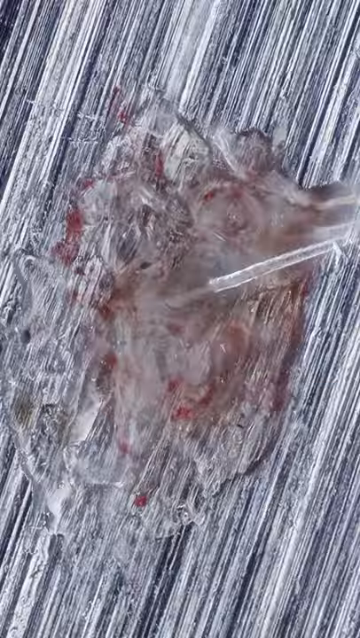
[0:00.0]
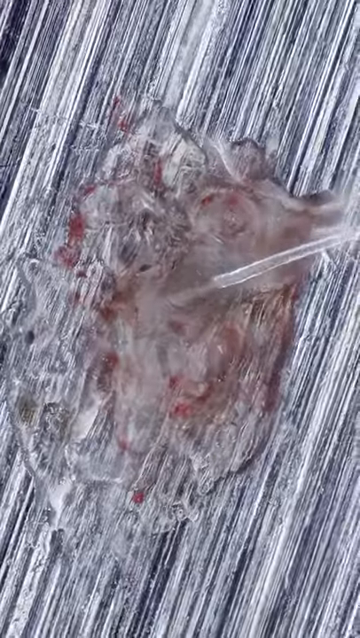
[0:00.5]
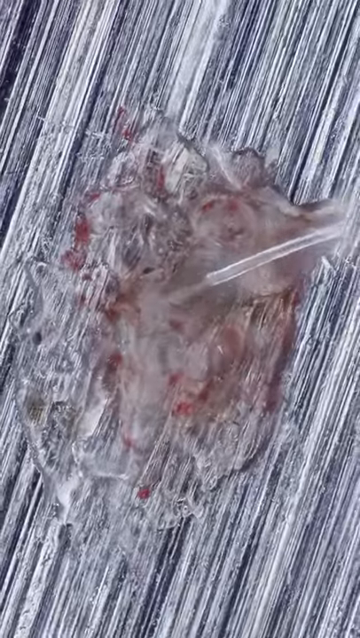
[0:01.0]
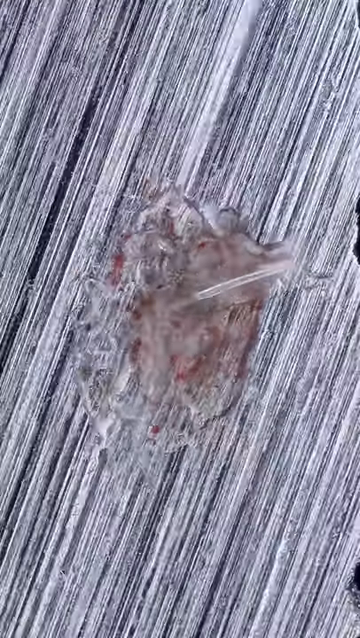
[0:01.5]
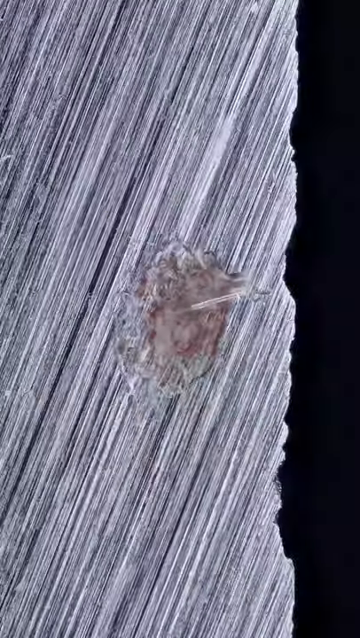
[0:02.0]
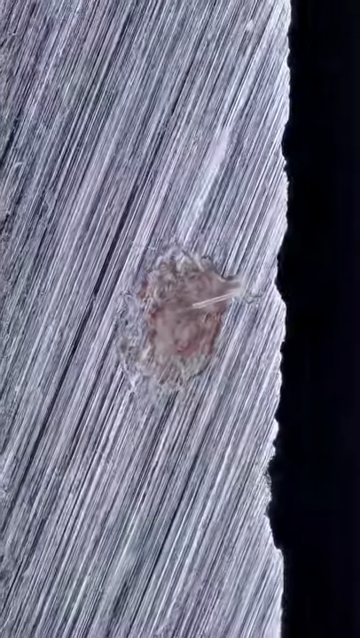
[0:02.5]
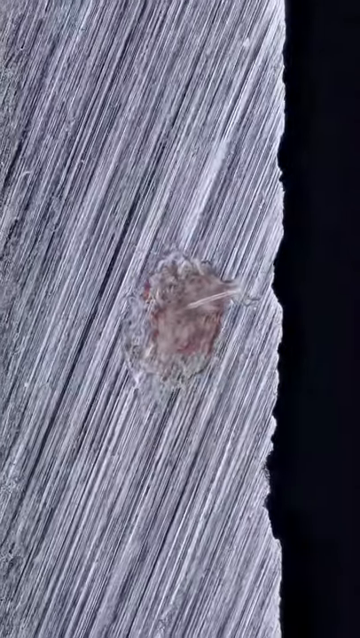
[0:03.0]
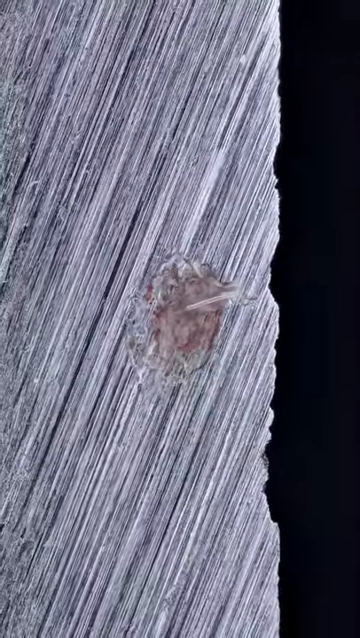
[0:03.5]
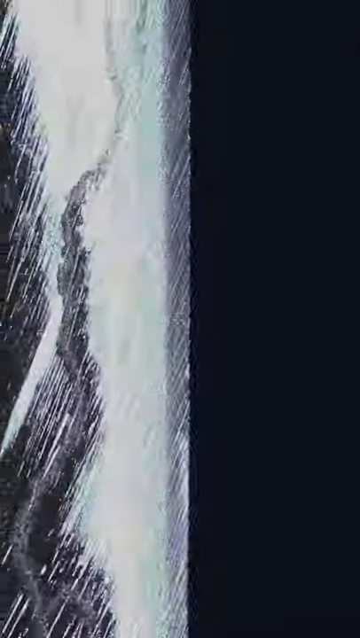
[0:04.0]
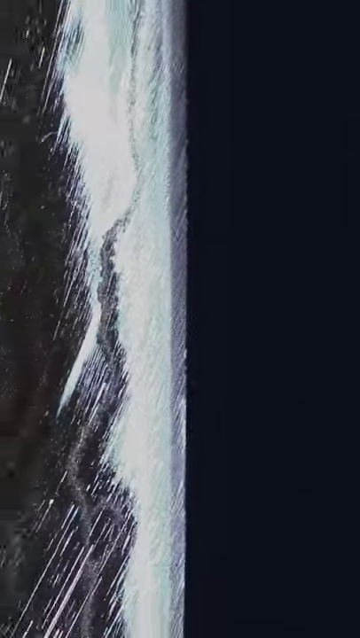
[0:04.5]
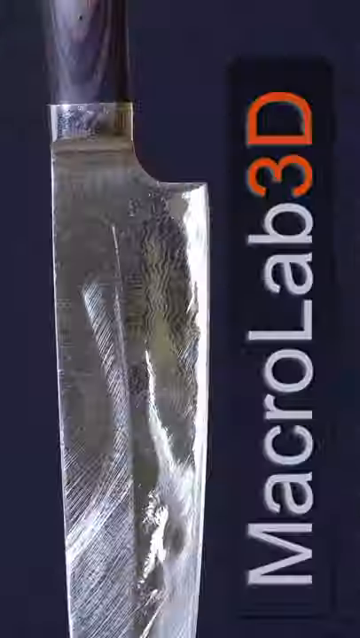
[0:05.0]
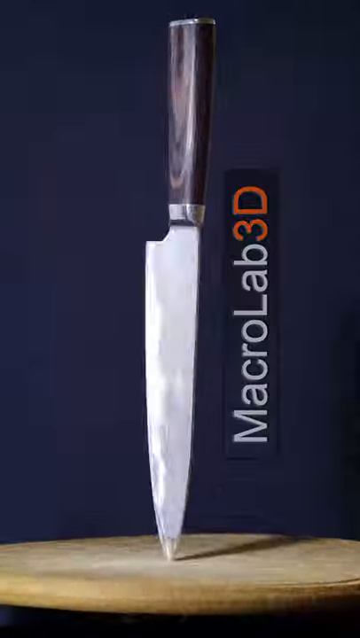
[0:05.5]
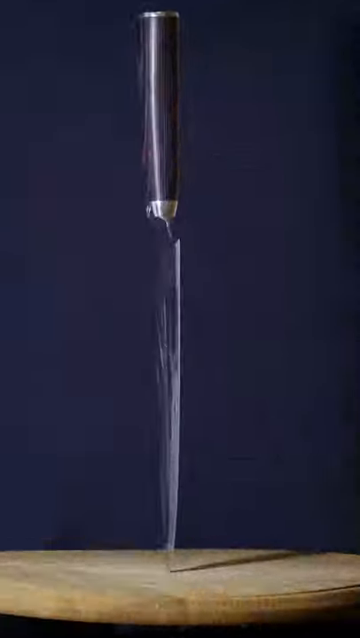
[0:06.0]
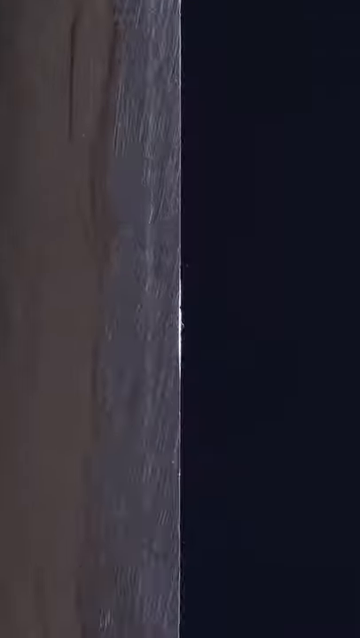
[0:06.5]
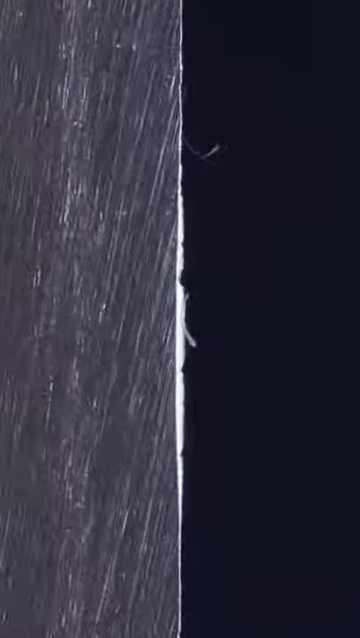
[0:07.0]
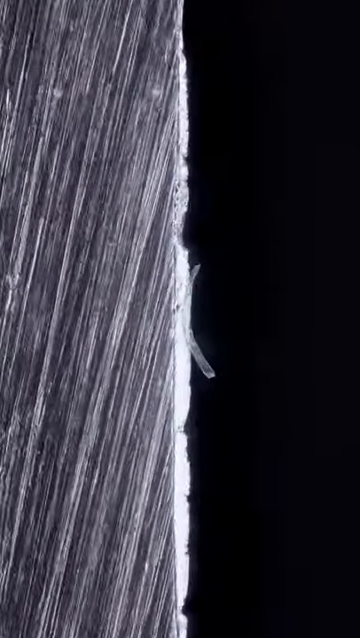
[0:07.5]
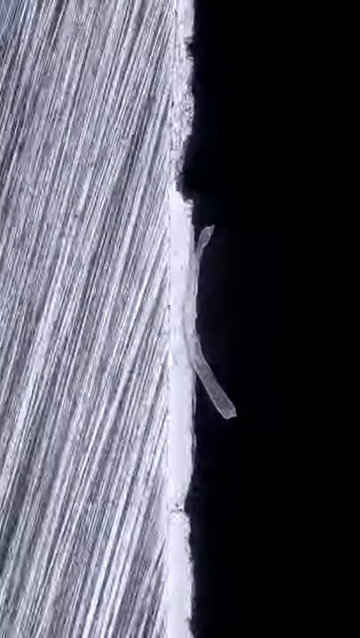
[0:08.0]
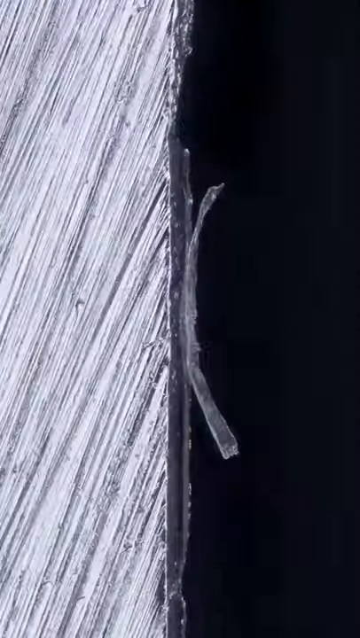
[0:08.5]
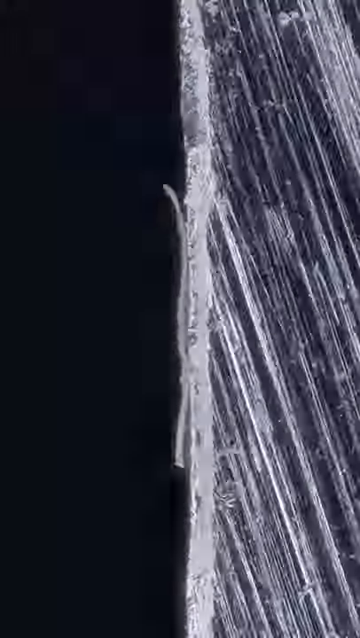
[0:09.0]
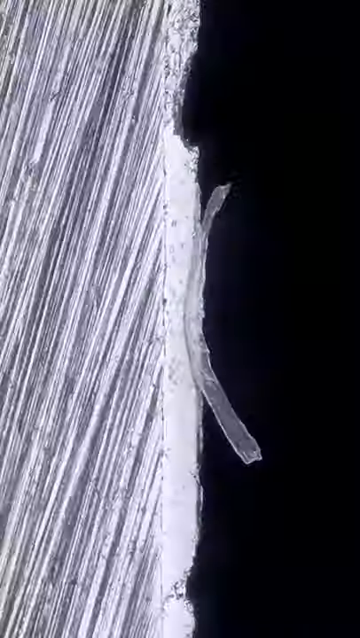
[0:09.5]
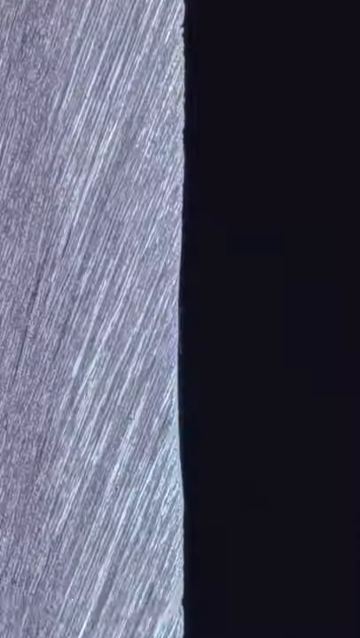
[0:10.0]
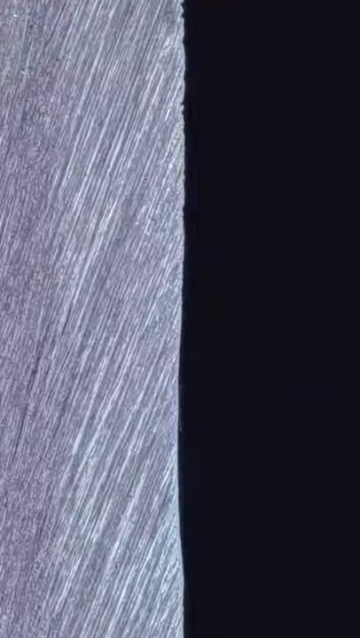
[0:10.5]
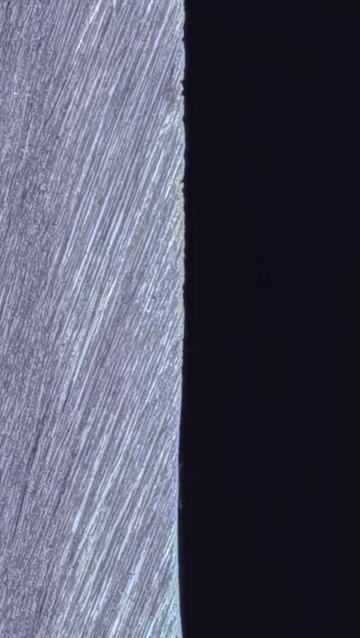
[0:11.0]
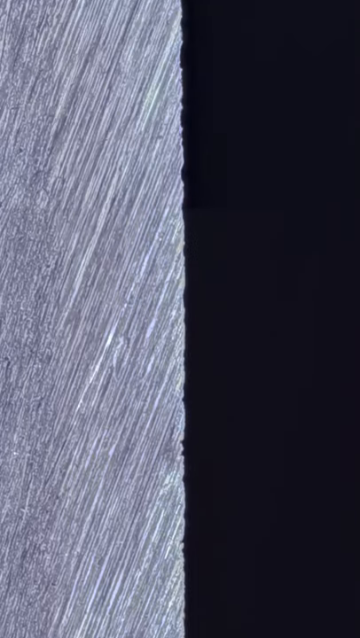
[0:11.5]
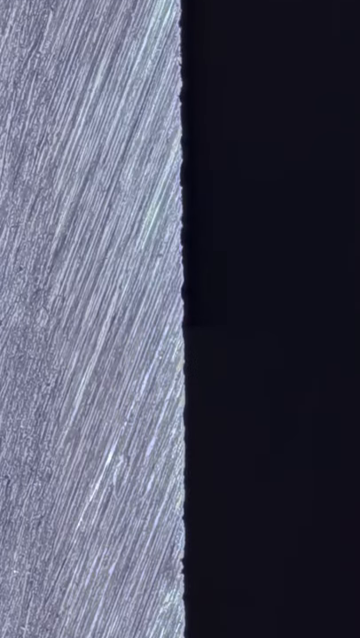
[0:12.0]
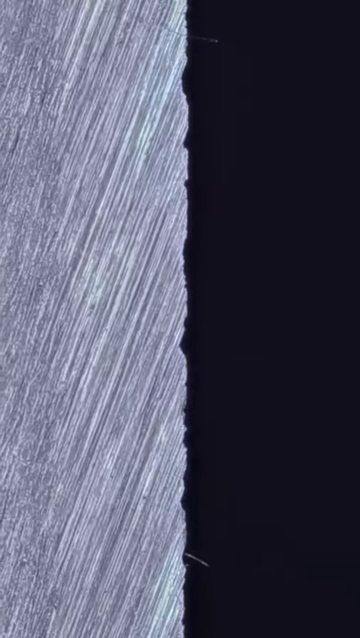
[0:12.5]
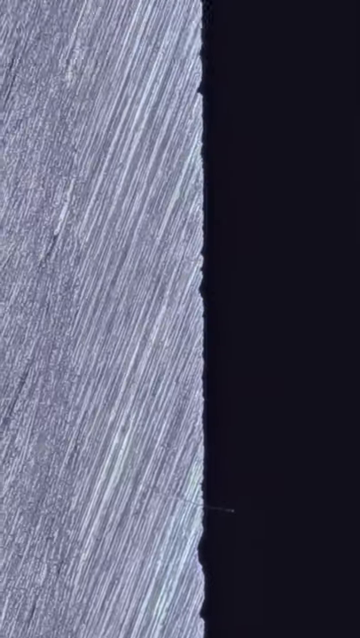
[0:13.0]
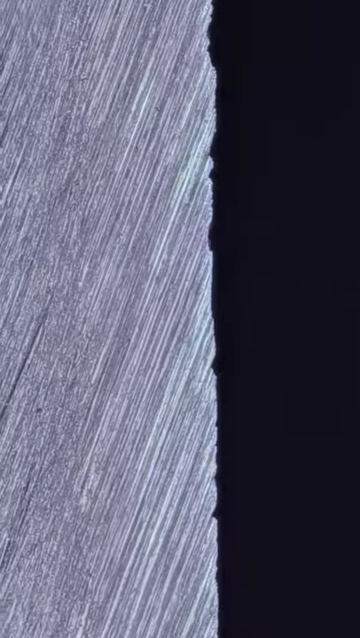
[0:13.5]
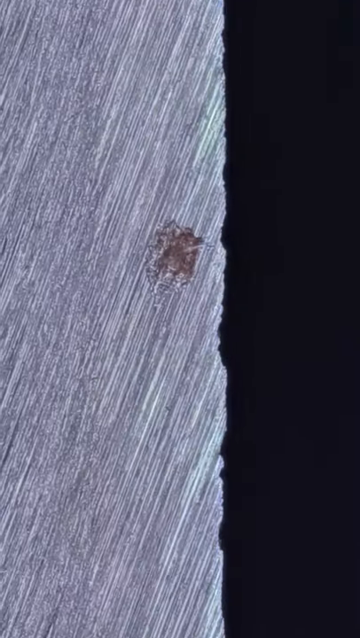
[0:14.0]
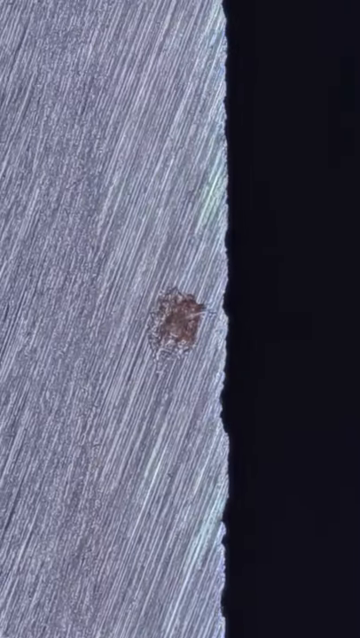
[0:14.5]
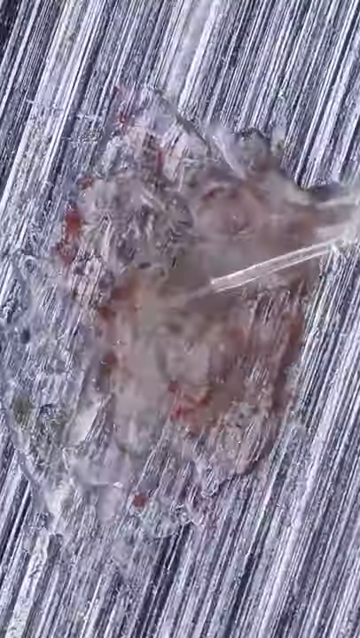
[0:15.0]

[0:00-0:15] An extreme close-up, essentially microscopic, shows the dull blade of a cutting knife. Serrations along the edge show its dullness, detail not visible to the naked eye. As the camera zooms in very close to the blade, the very pronounced rough edges of the dull knife appear, with tears in the metal and uneven edges. The camera then pulls out to show the entire length of the knife, with its black handle, the bezel, and the blade, which looks sharp and normal from this distance even though the zoomed view showed the edge is quite jagged. The knife stands upright as though poked into a cutting board. On the right side, running vertically, is the text "Micro Lab" in white and "3D" in red lettering. Everything is set against a black background.